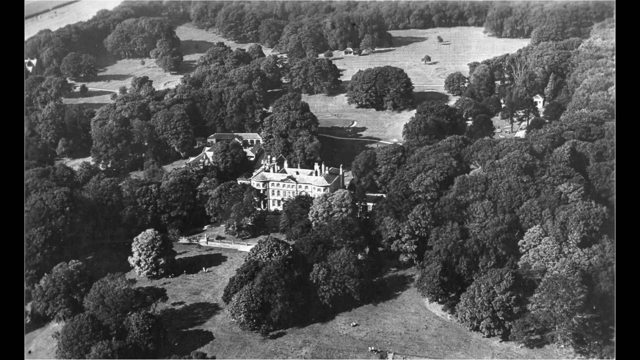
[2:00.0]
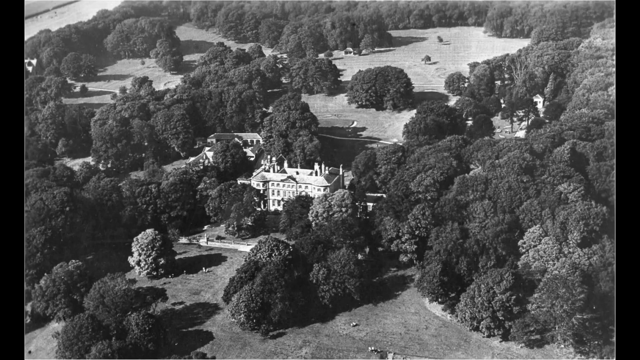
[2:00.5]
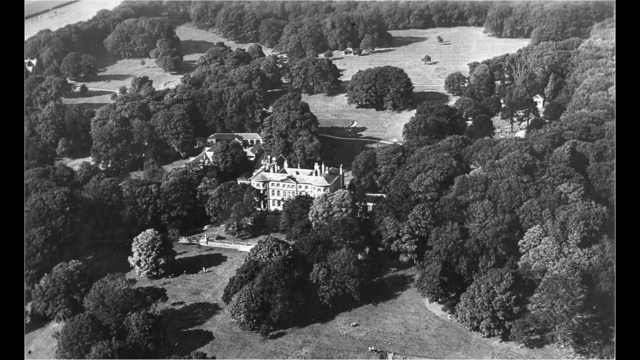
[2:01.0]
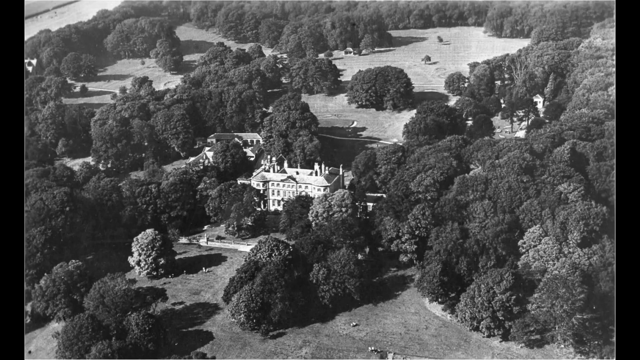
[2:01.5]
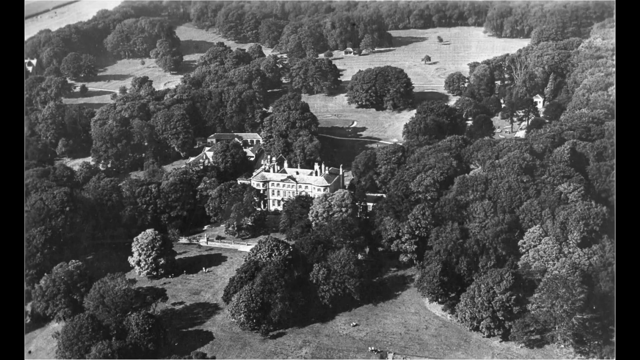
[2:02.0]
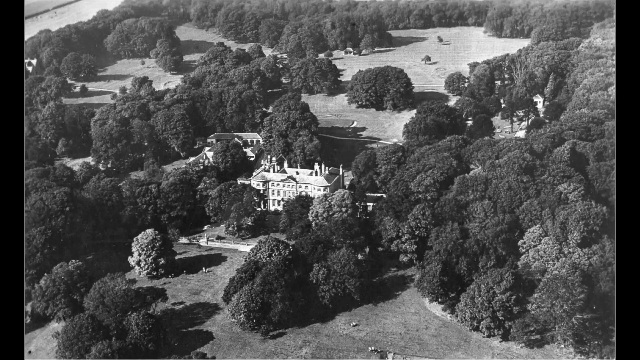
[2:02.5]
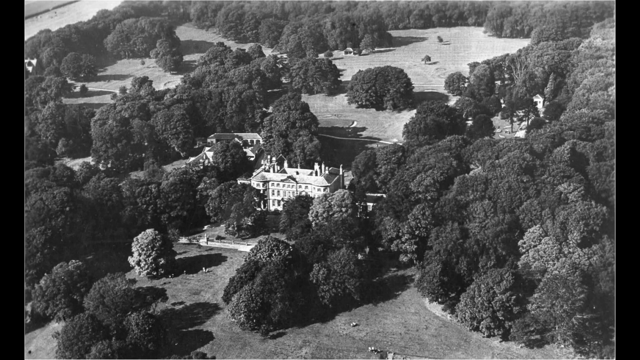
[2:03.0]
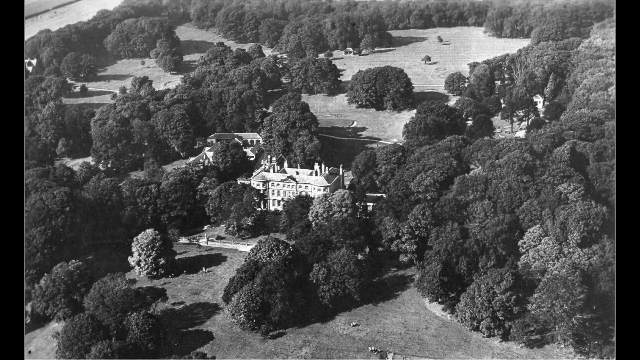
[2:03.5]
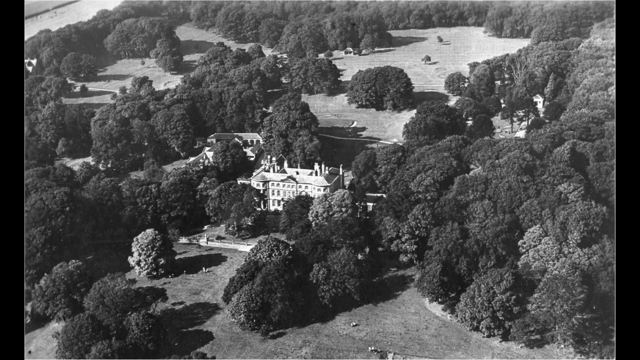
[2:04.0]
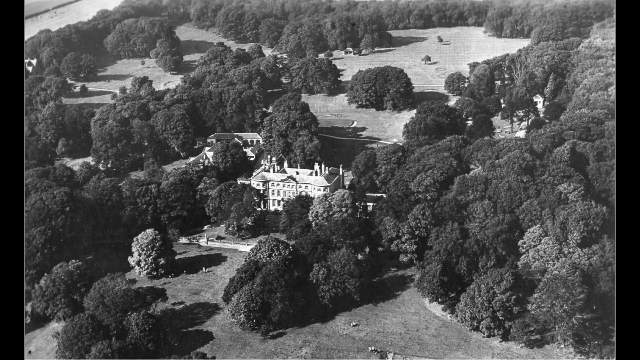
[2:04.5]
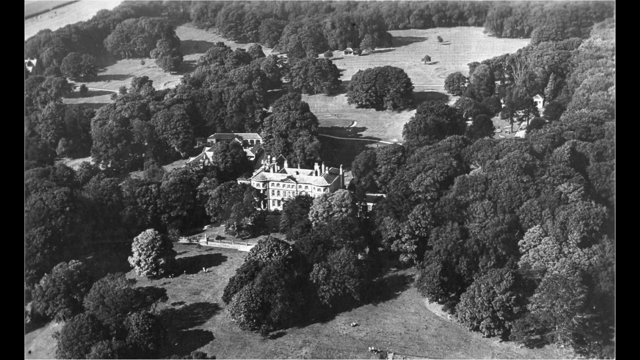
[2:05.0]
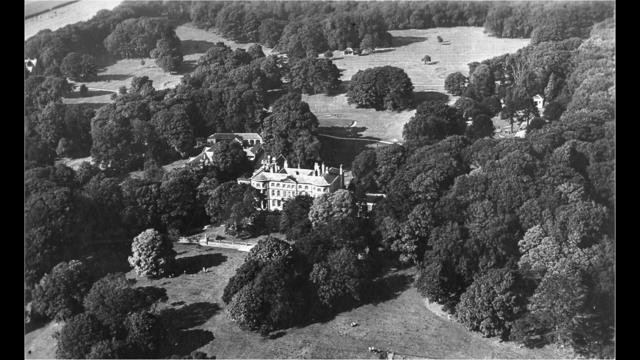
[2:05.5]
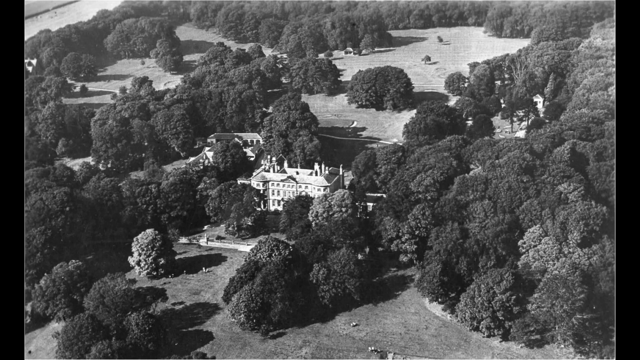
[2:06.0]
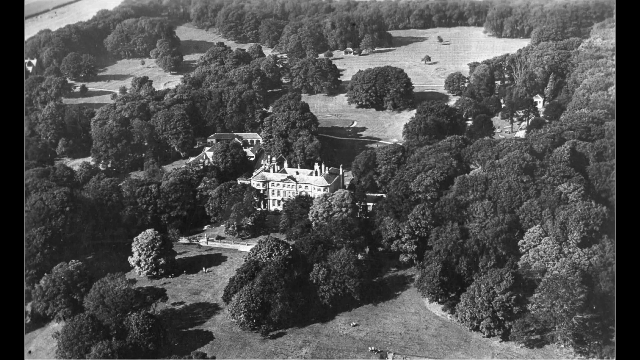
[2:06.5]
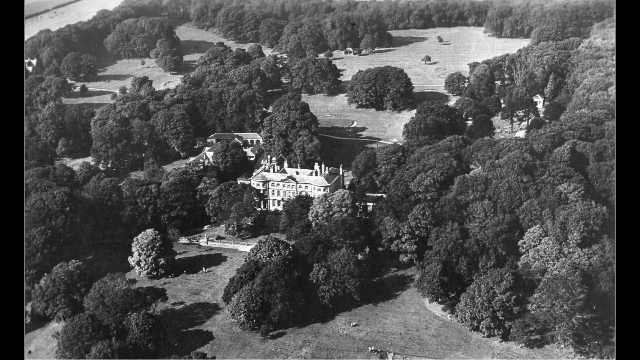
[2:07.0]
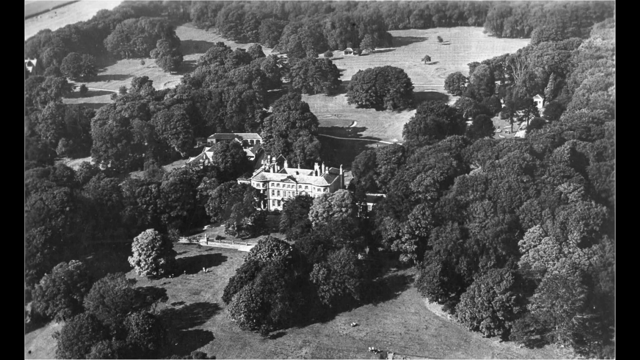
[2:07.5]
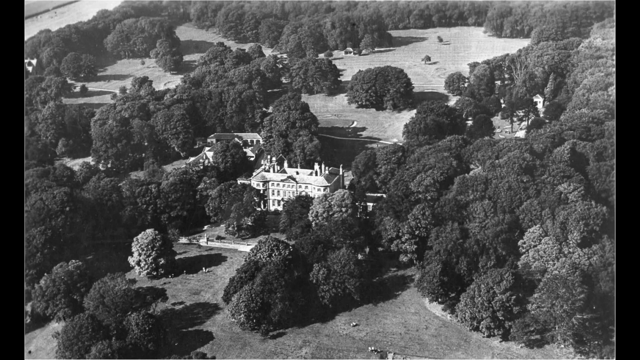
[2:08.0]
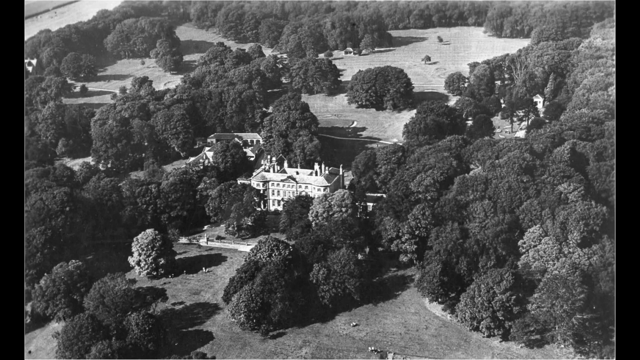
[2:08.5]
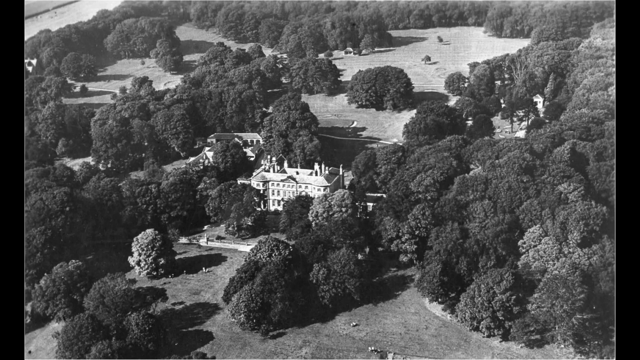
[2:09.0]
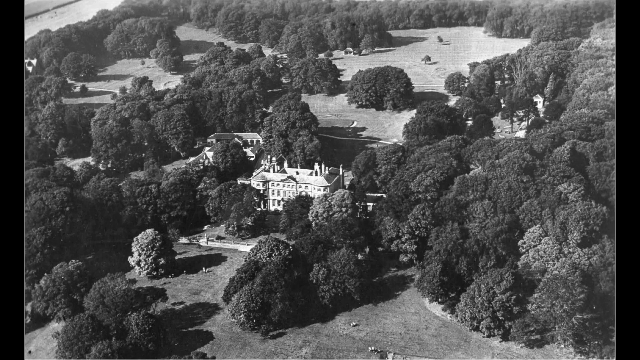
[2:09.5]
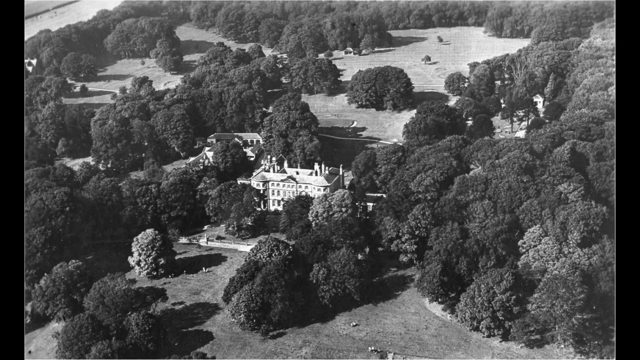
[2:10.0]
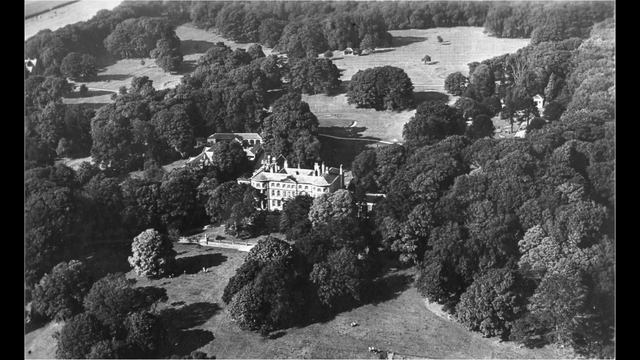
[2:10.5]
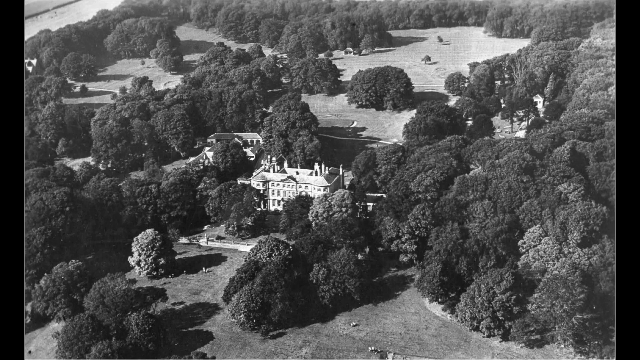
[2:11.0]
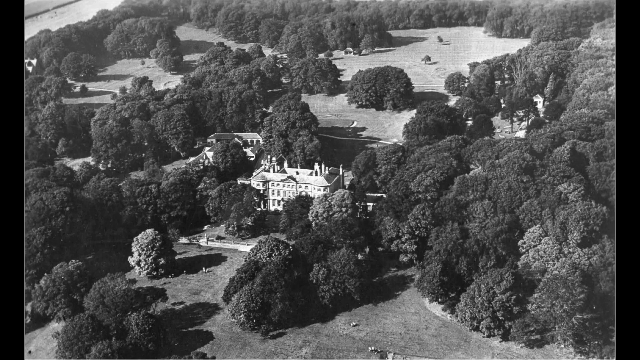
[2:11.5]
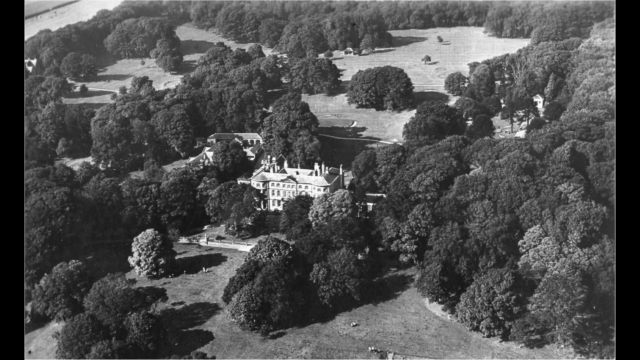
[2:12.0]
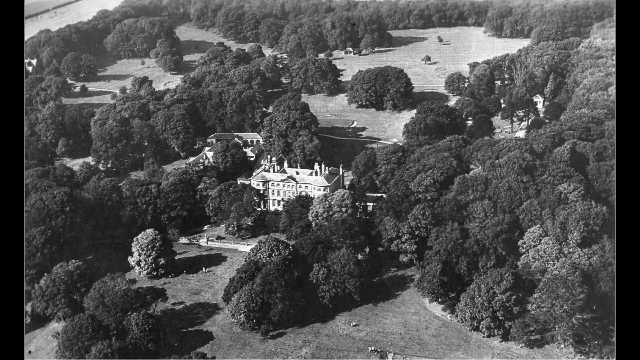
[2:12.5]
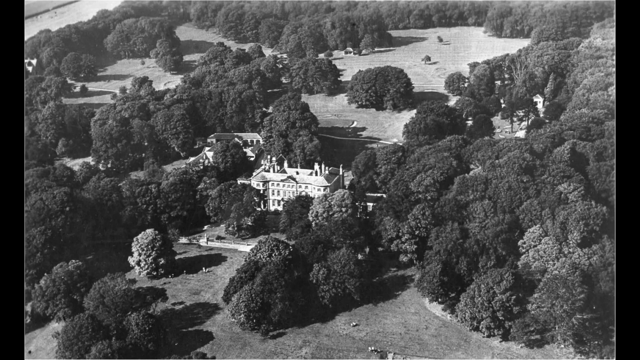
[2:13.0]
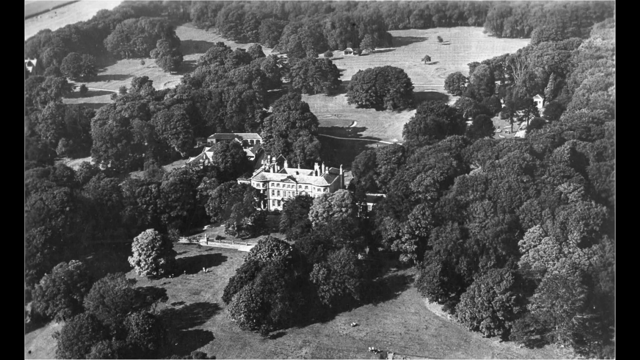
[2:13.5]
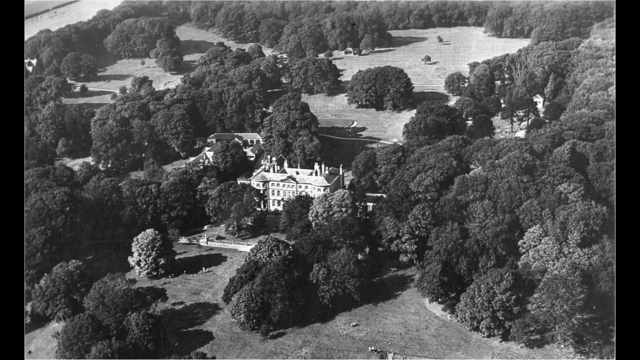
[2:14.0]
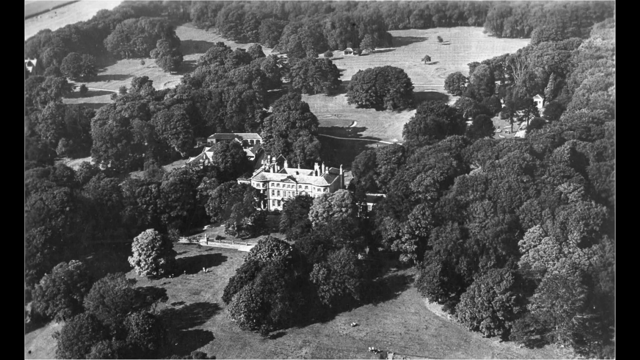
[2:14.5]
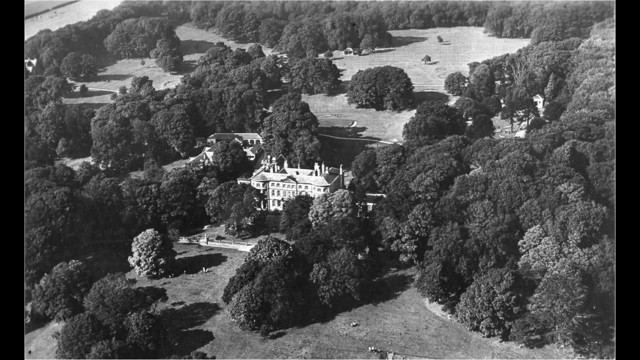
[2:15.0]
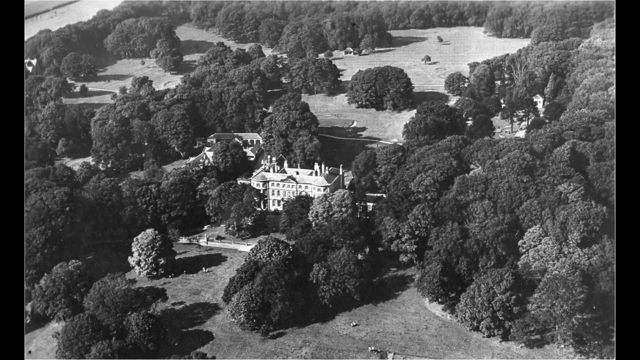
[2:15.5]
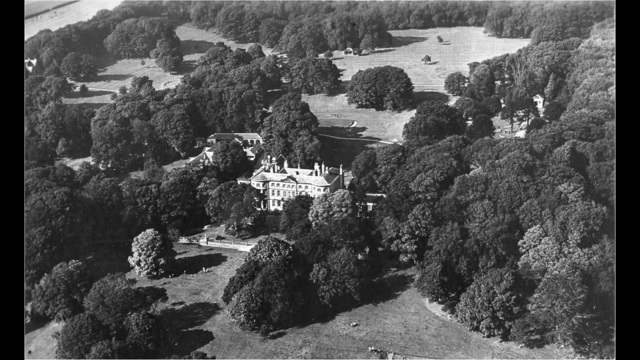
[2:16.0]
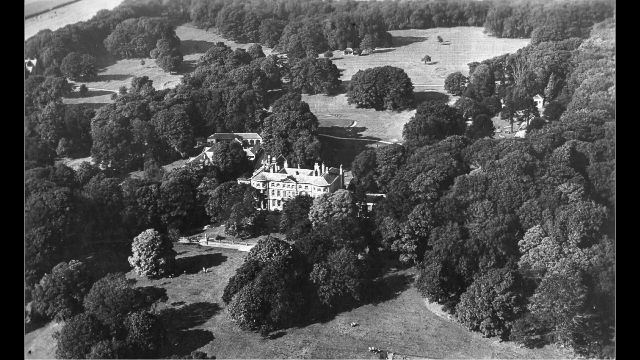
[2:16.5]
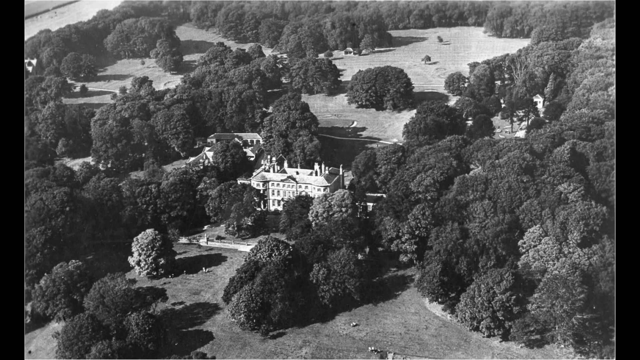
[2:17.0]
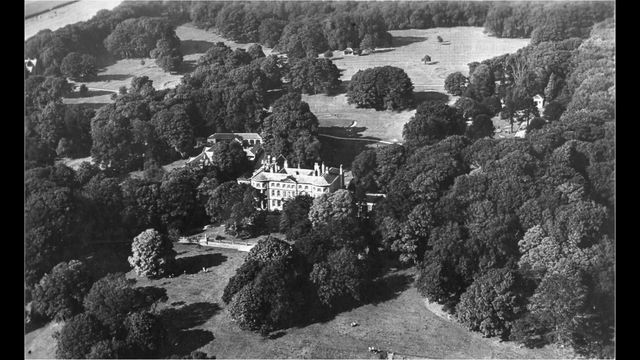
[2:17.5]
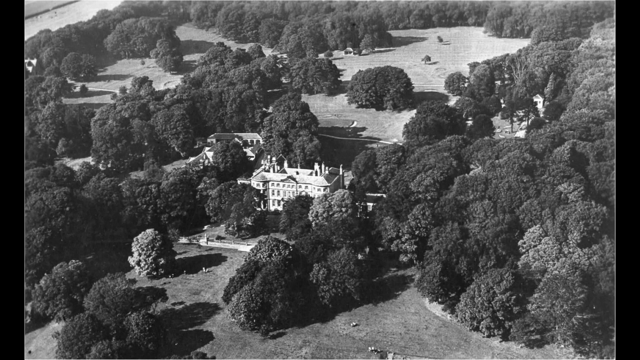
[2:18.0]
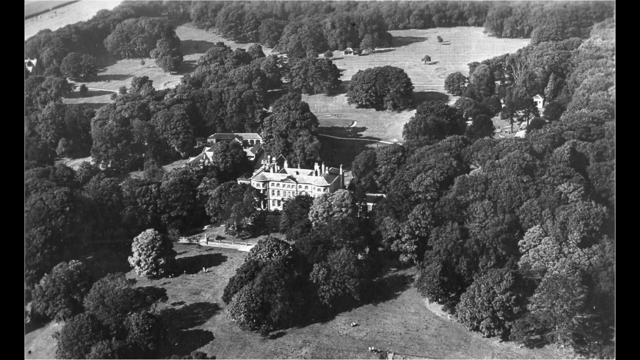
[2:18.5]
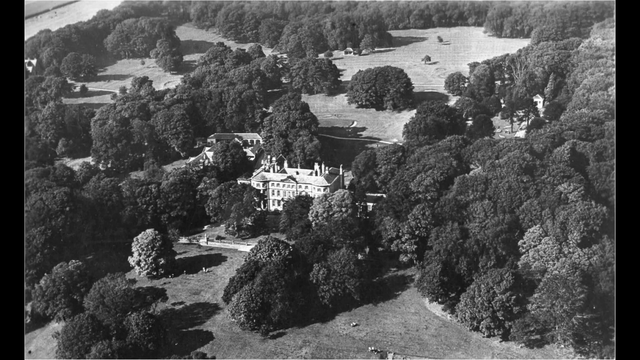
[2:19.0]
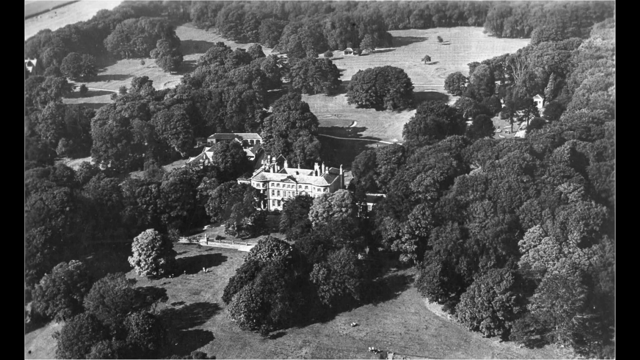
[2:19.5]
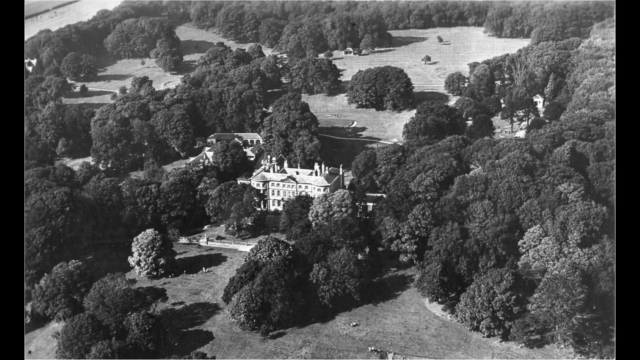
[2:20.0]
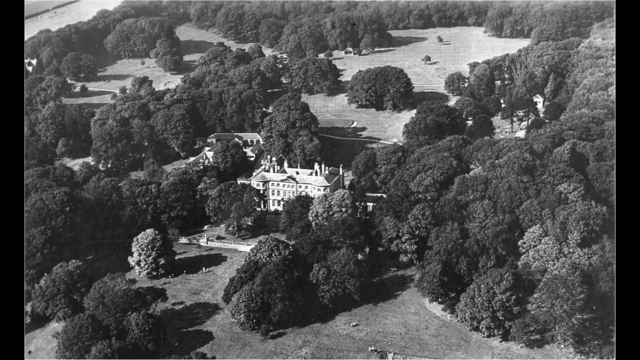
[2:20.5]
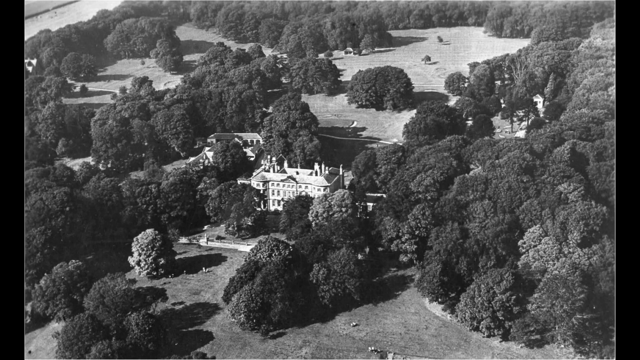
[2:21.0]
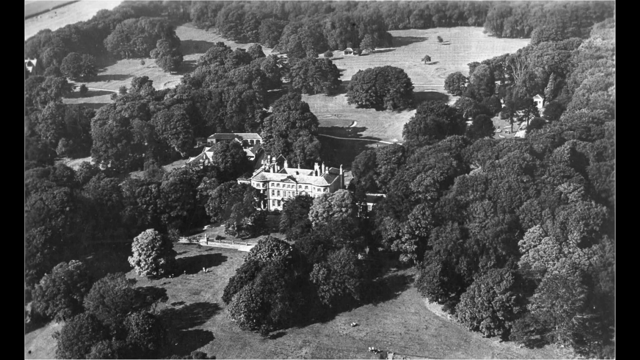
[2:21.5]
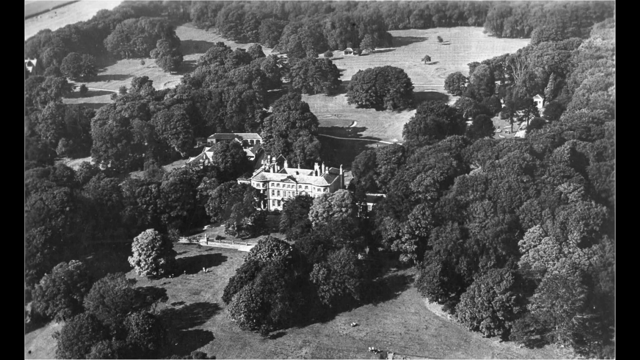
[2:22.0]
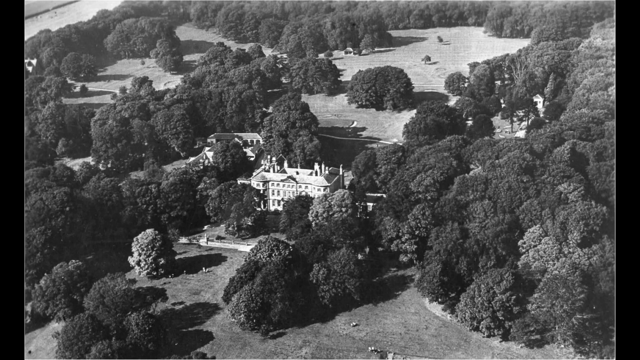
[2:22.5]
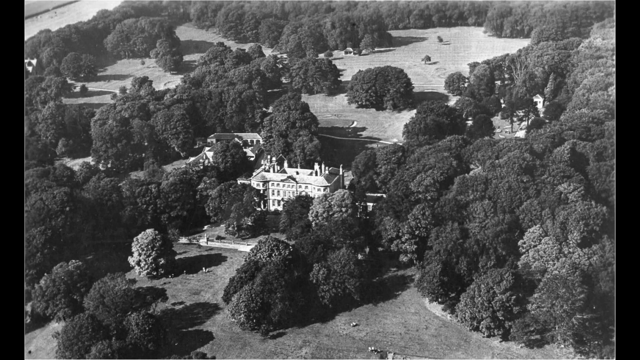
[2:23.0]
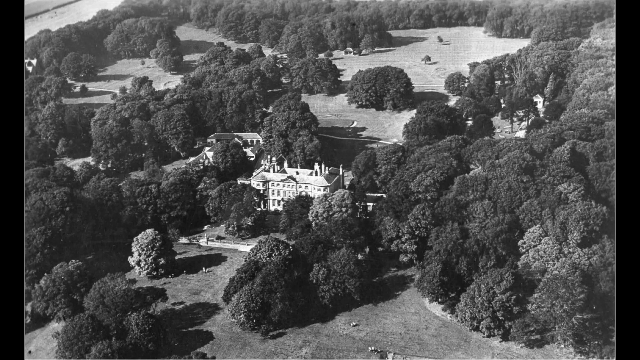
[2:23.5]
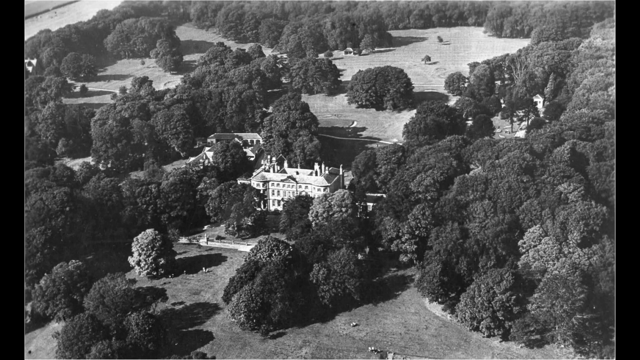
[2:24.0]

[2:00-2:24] An overhead view, taken from an airplane, shows what looks to be a very large university building. There are open spaces behind it, and trees line the right, the left and the back. Another building is behind and to the viewer's left of the college building. There is no wording or lettering anywhere on the photograph. The building looks like the same one as Sewerby Hall, Bridlington.